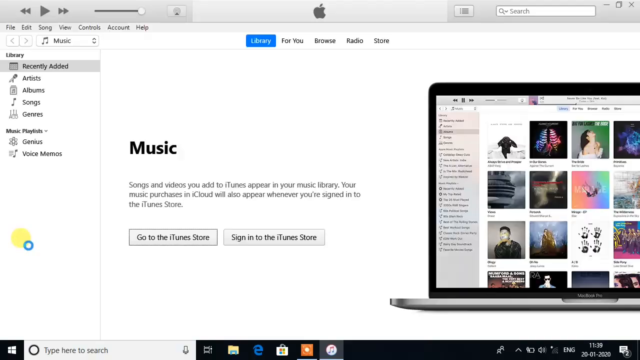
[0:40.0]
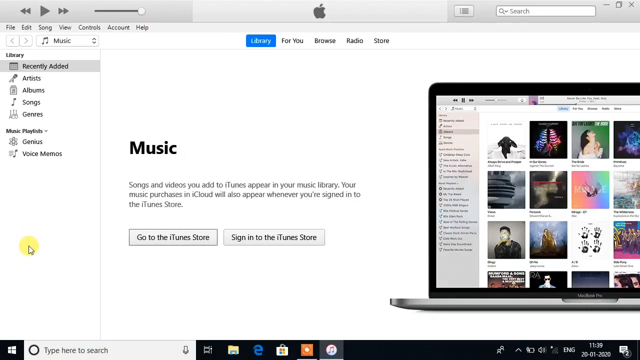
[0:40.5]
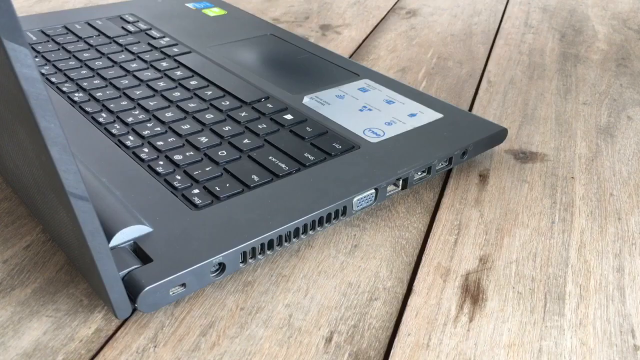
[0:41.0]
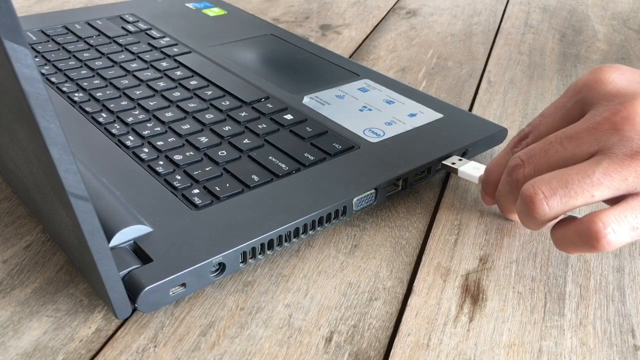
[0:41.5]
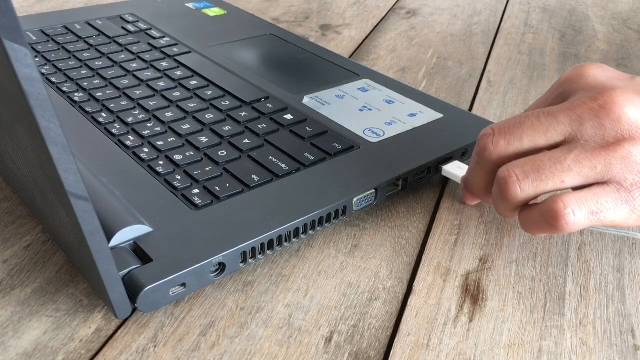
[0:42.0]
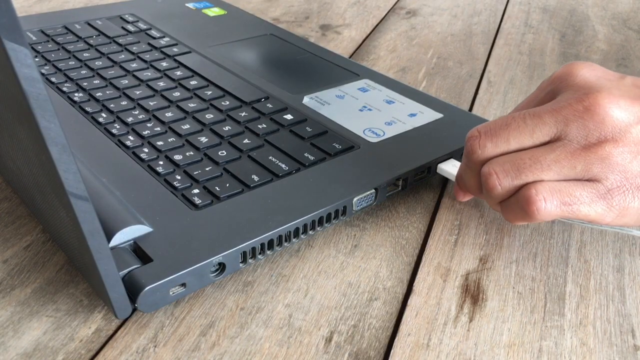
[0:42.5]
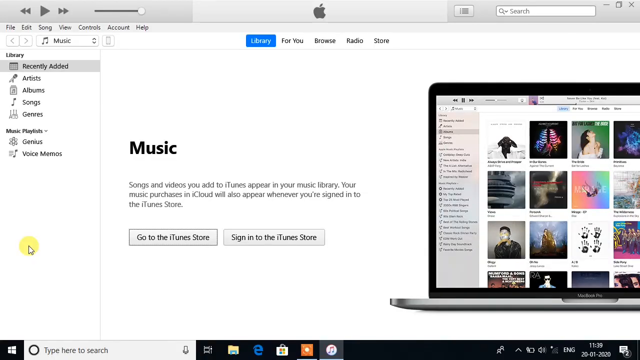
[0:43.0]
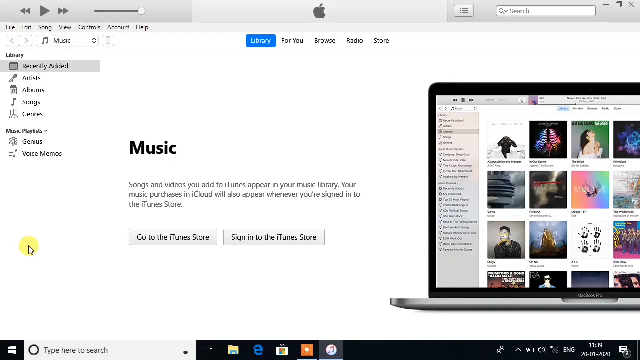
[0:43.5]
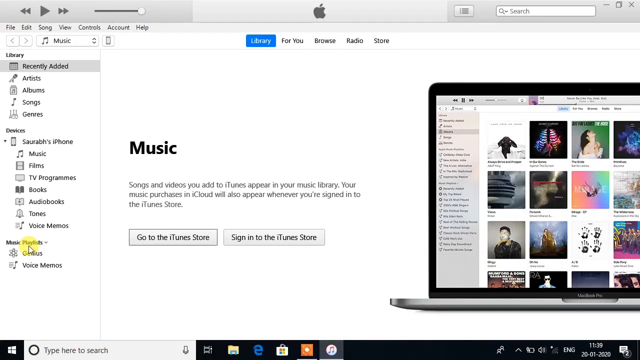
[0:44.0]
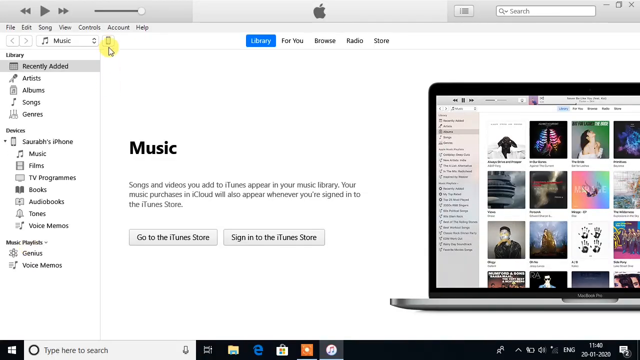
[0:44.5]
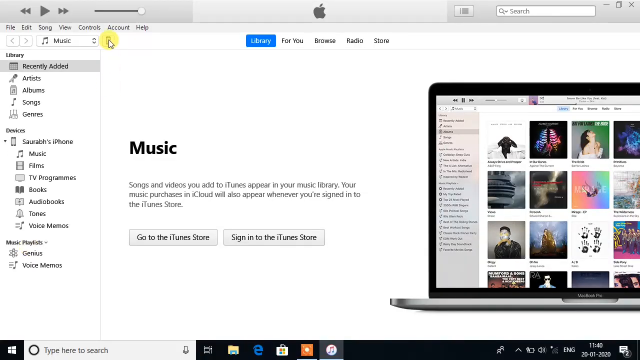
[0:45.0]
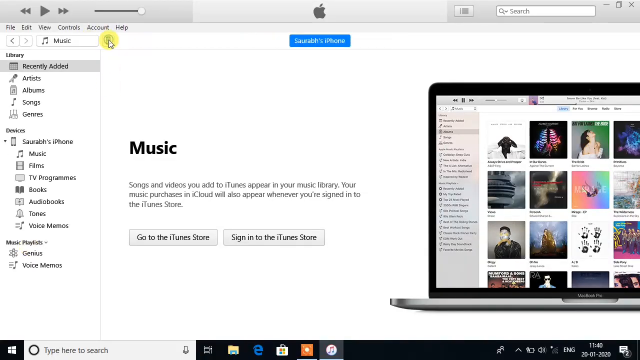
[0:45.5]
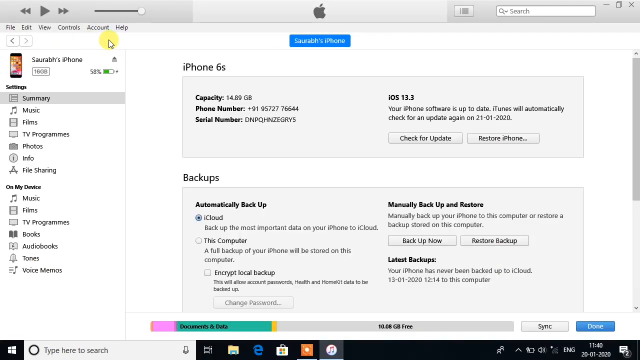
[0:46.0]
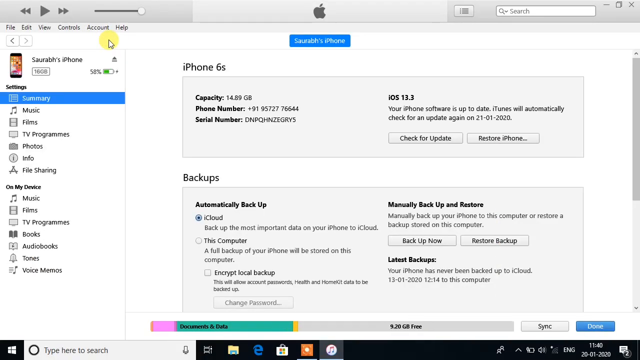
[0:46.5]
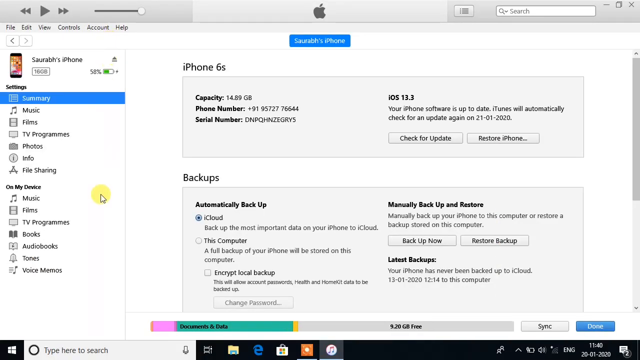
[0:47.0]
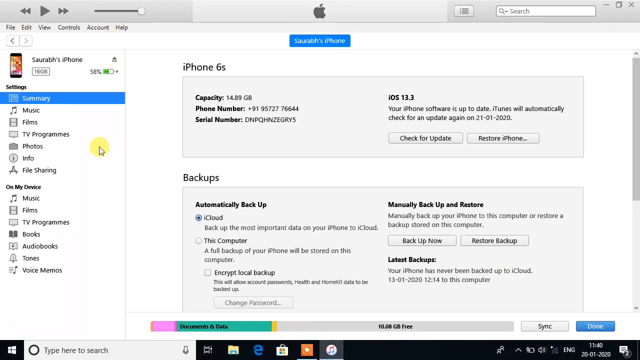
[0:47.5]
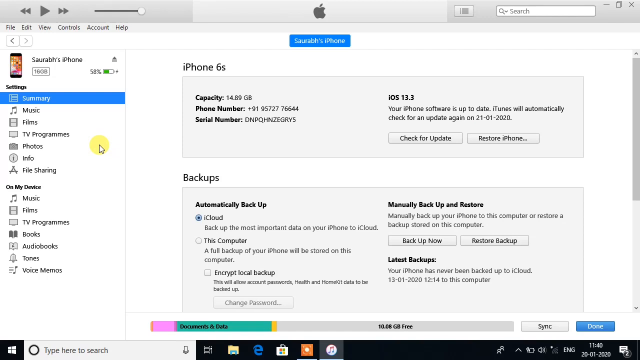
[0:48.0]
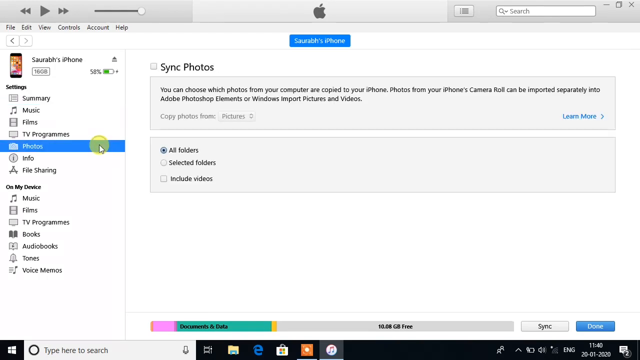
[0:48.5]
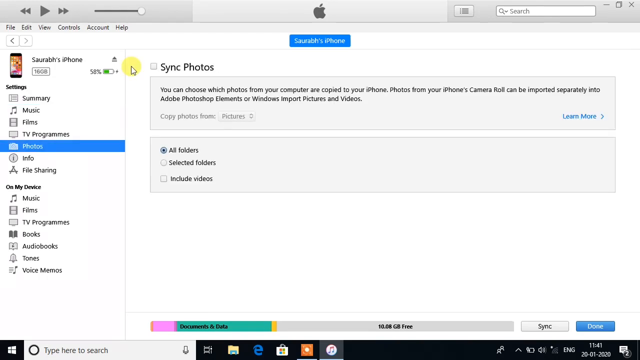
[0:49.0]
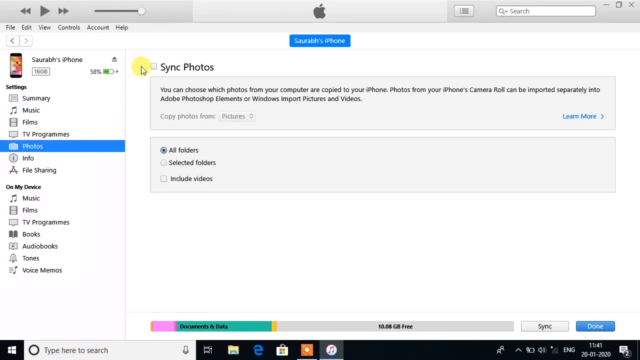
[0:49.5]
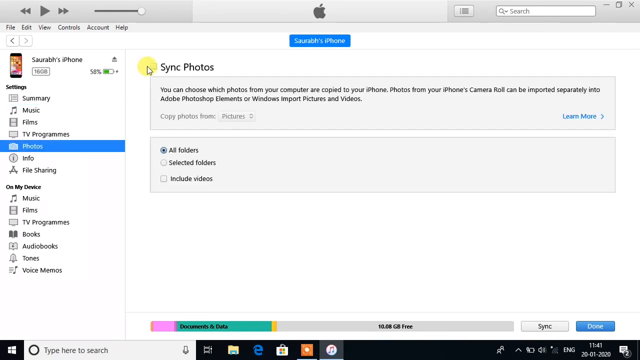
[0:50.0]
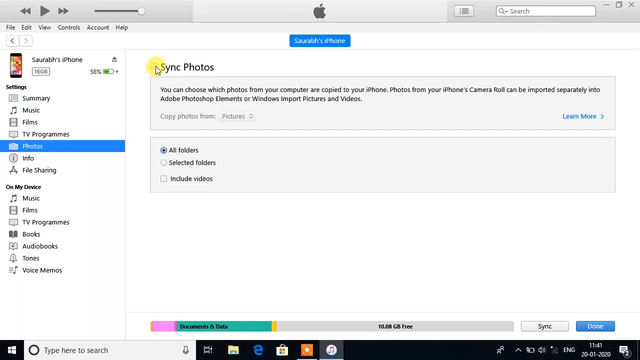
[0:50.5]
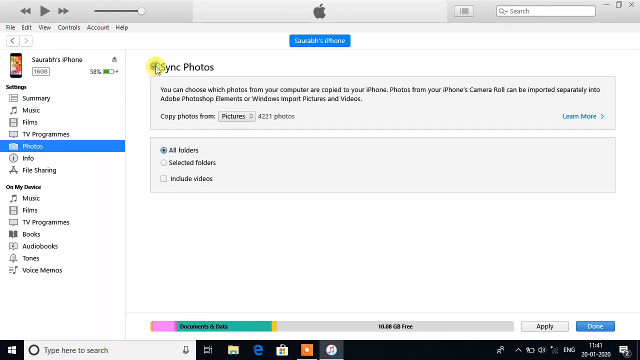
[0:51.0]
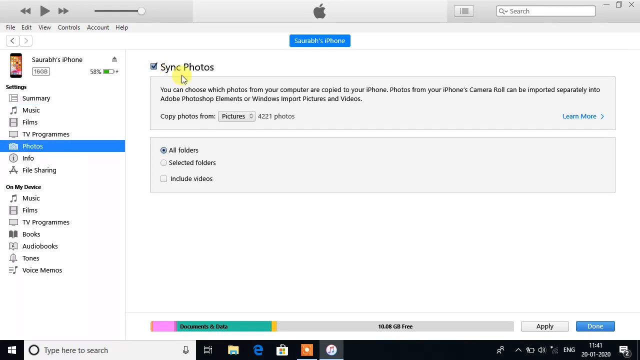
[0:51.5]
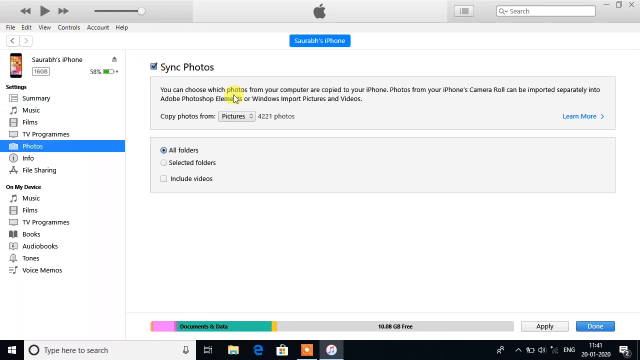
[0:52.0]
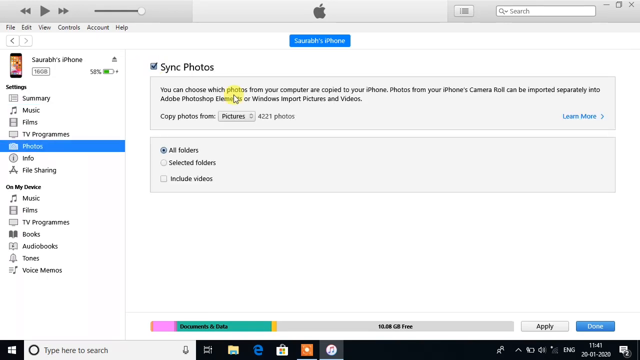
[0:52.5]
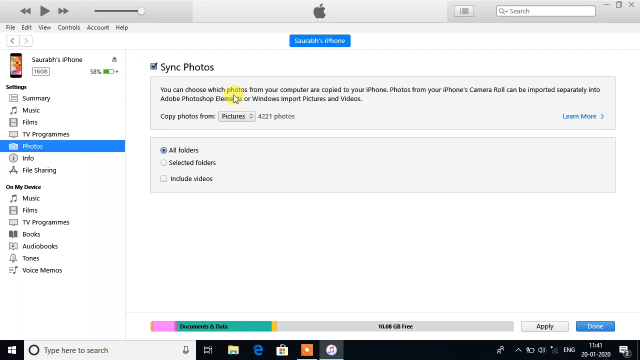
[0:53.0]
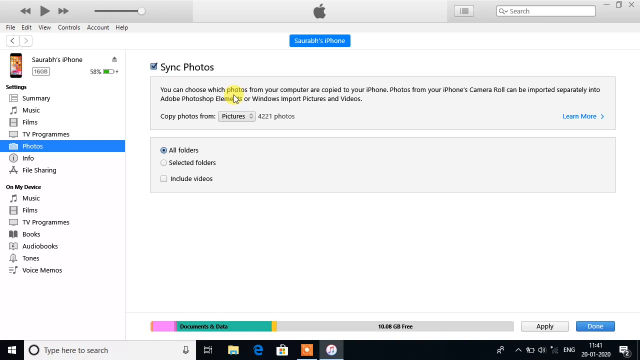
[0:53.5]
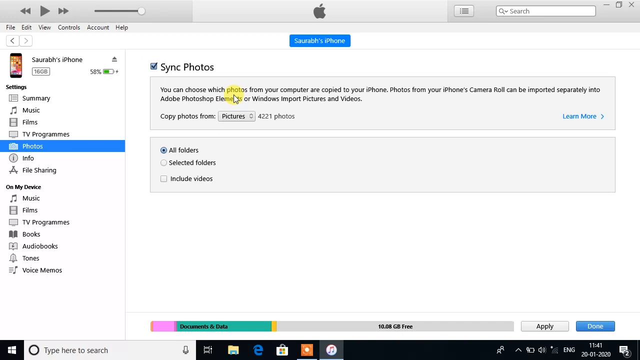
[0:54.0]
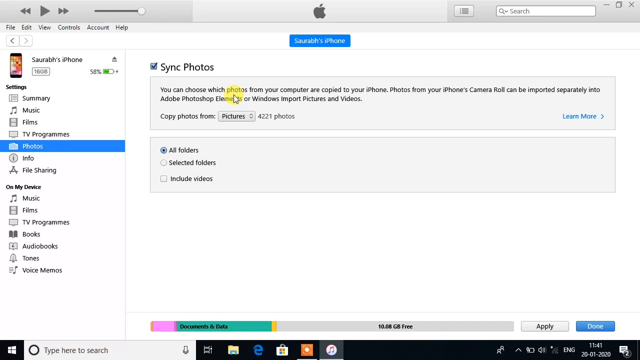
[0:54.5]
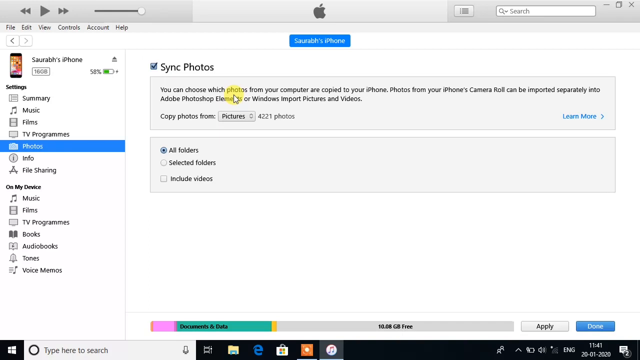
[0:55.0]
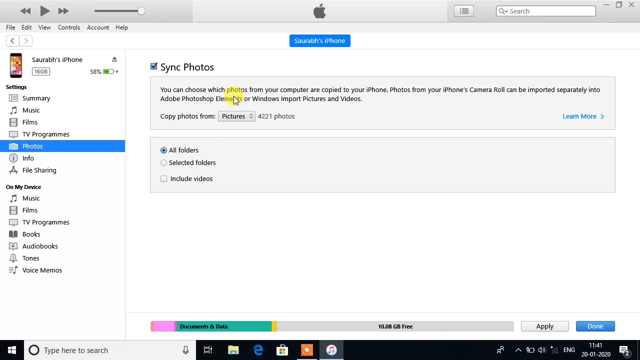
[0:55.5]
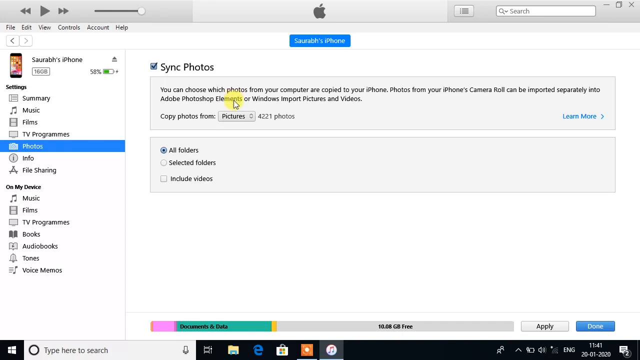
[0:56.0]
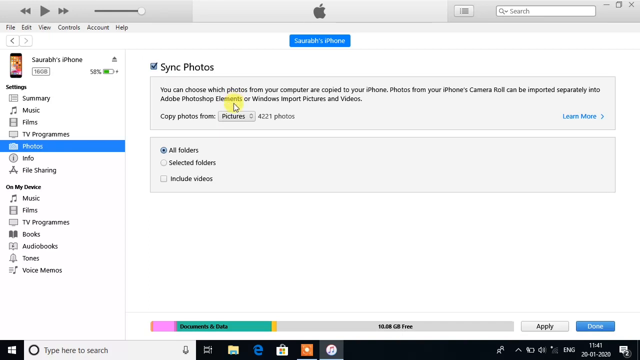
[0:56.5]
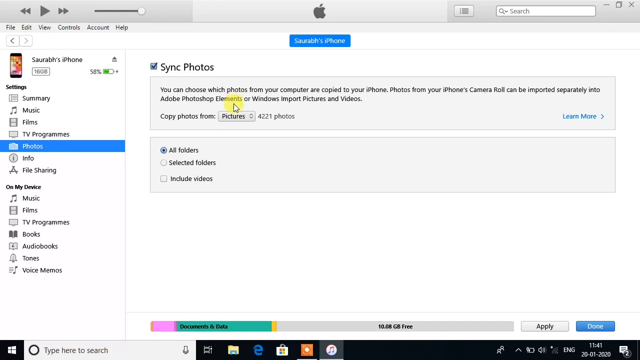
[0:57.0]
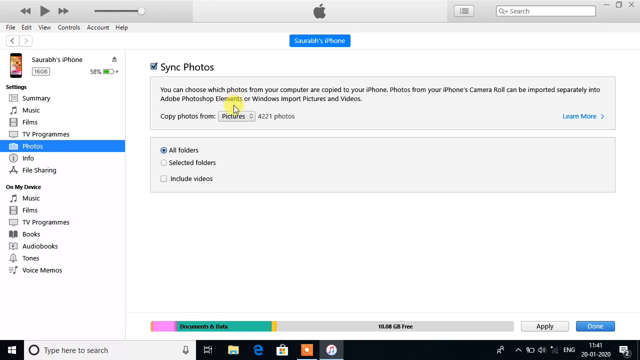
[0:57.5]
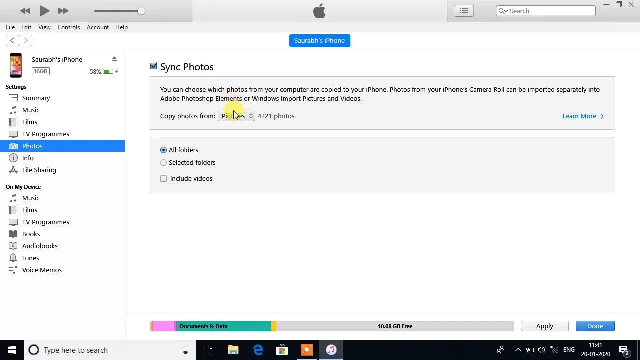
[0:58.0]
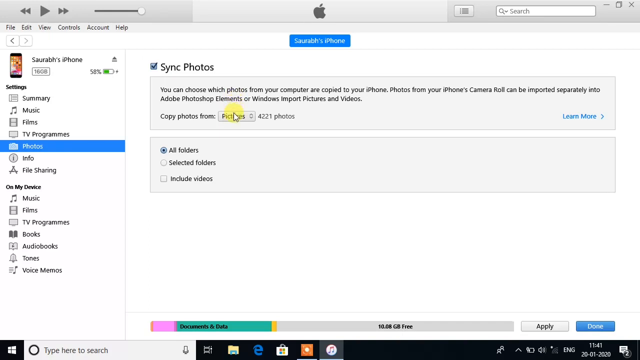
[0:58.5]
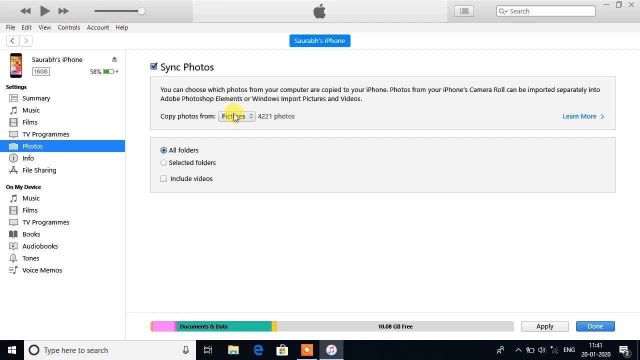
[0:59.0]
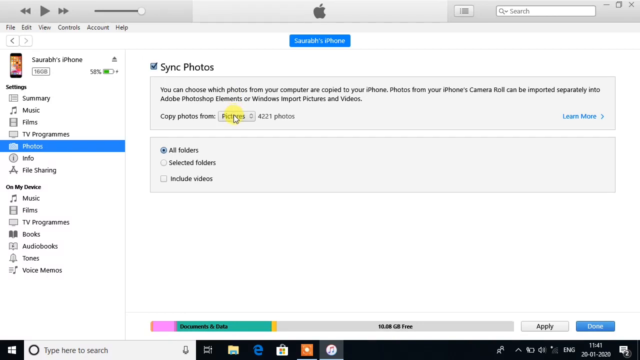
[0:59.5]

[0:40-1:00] iTunes opens to the Apple library, with a music screen that says "go to the iTunes Store" or "sign in to the iTunes Store", a library menu down the left-hand side, and an image of a laptop with different album covers on it. Next comes a shot of a laptop on a table and a person connecting what is apparently a USB into the laptop. The user then clicks on what looks like an image of possibly their cell phone, and a menu for "iPhone 6s" pops up showing what is on the phone and its information. It includes backup information with options to automatically back up to the cloud or the computer; the cloud is currently selected. At the top of the side panel the phone is shown connected to iTunes, with a menu bar below it. The user scrolls down to photos, a menu pops up saying "sync photos", and they click the square next to it. Then it says "copy photos from", and the user moves to show where the selection is made.